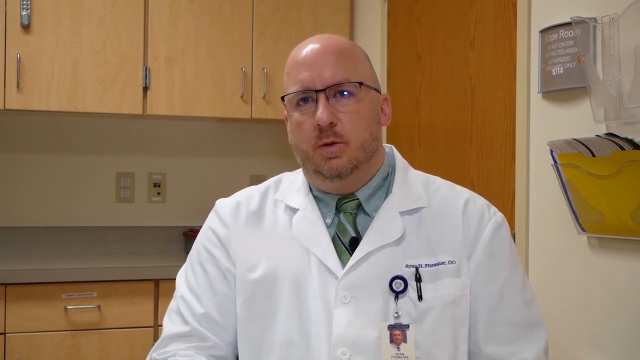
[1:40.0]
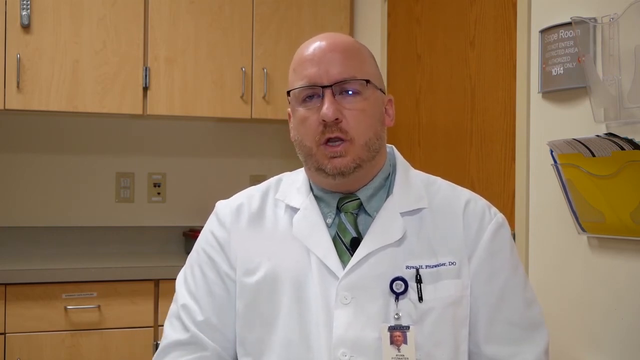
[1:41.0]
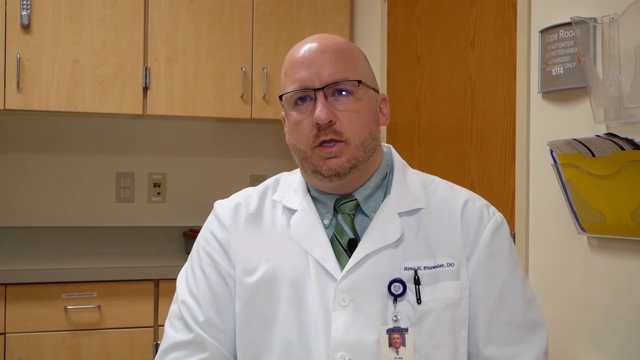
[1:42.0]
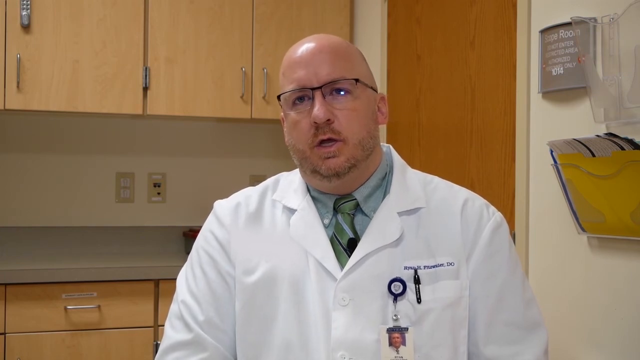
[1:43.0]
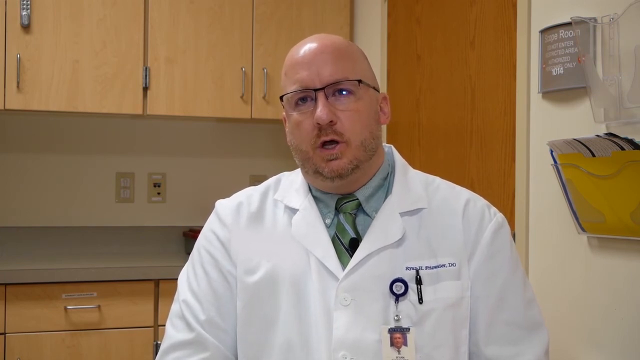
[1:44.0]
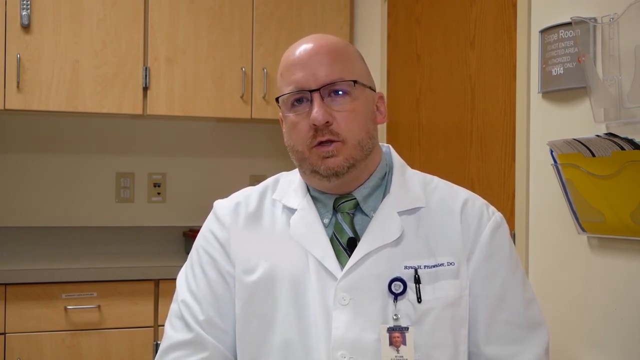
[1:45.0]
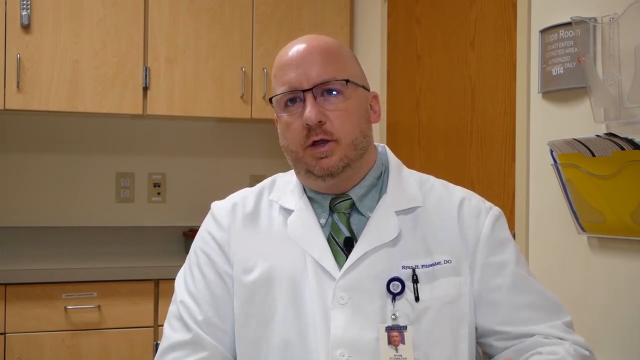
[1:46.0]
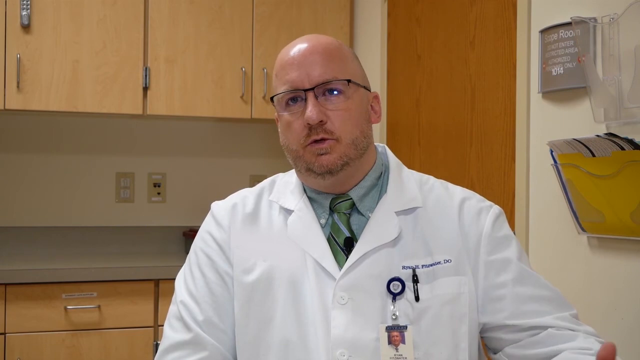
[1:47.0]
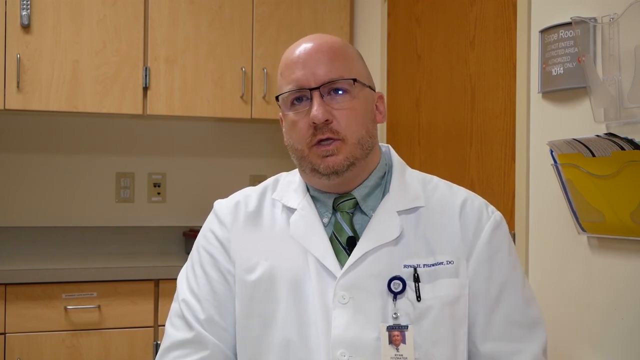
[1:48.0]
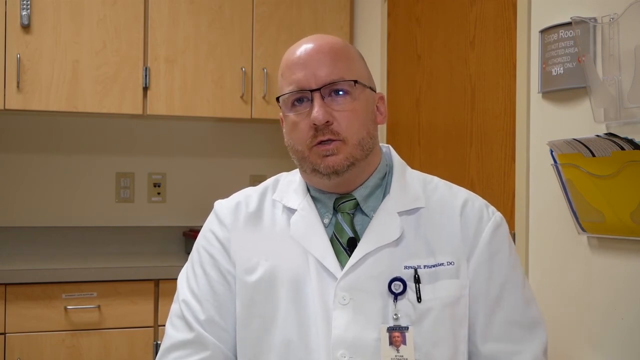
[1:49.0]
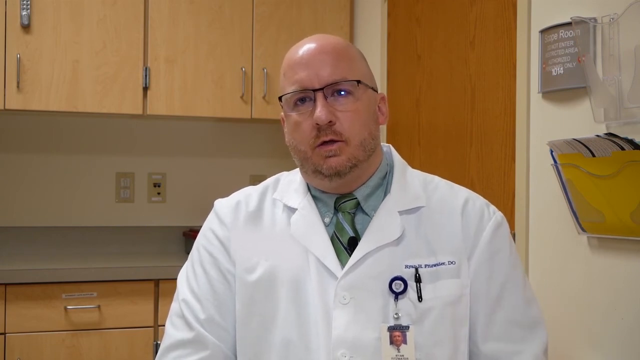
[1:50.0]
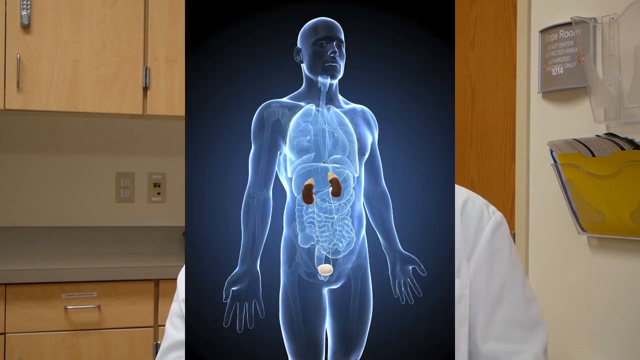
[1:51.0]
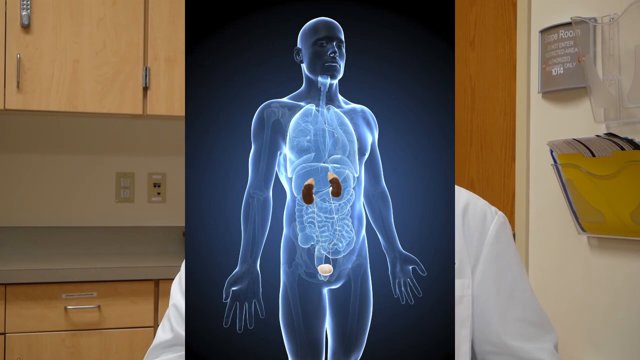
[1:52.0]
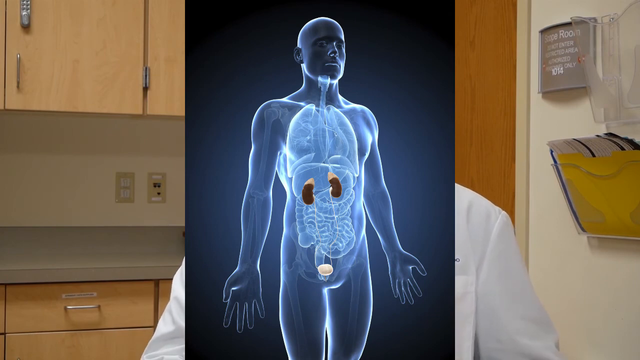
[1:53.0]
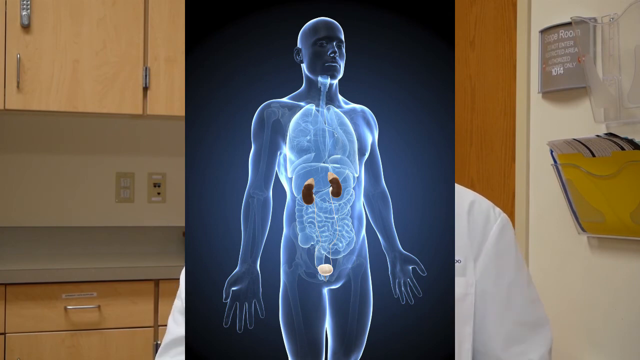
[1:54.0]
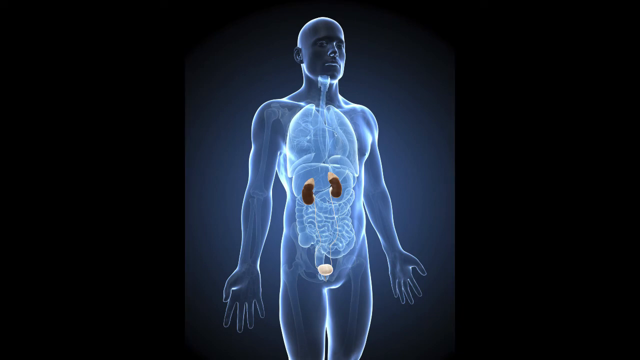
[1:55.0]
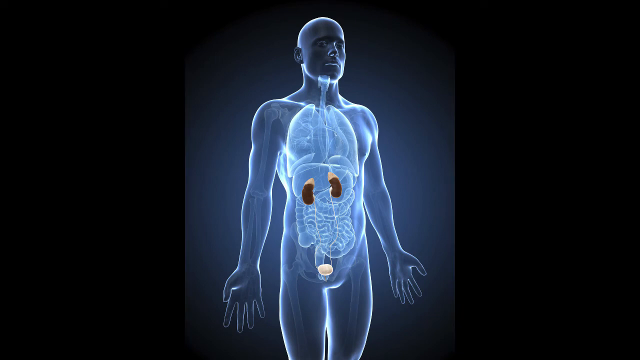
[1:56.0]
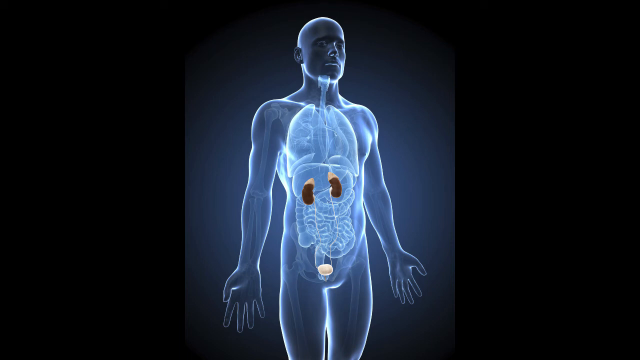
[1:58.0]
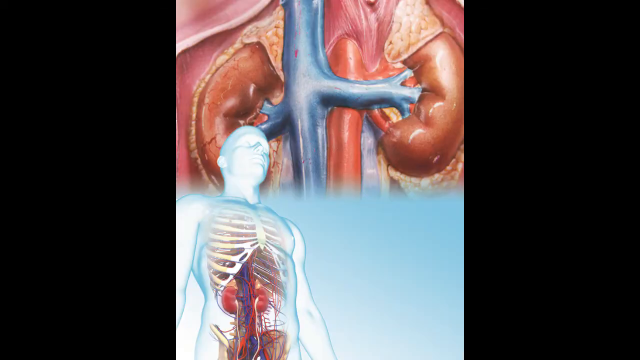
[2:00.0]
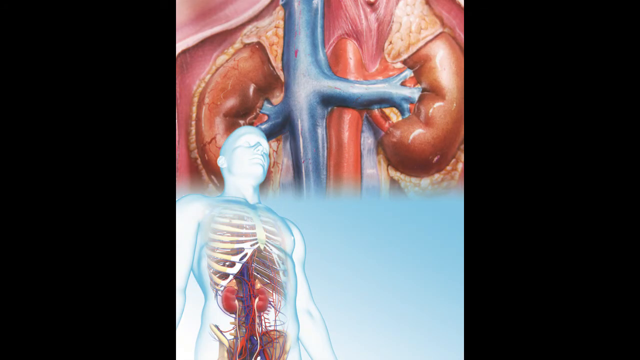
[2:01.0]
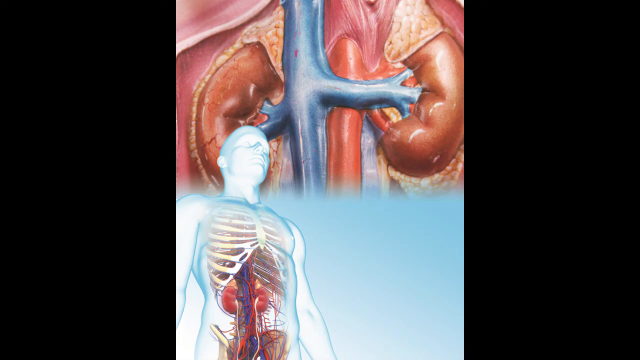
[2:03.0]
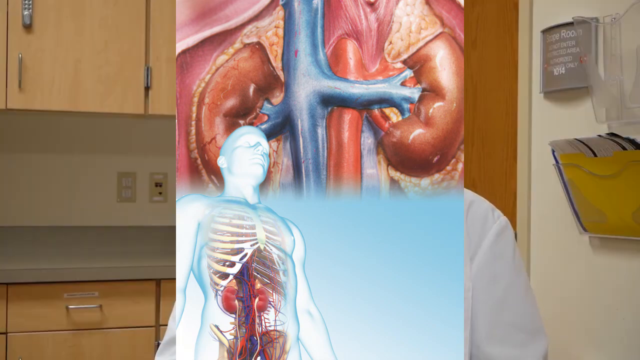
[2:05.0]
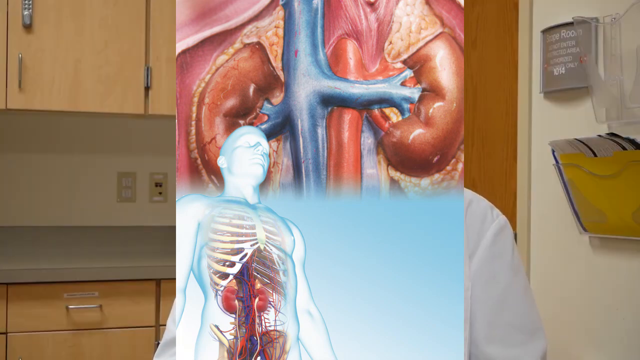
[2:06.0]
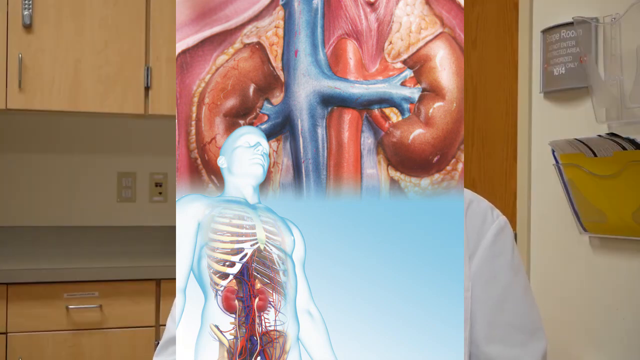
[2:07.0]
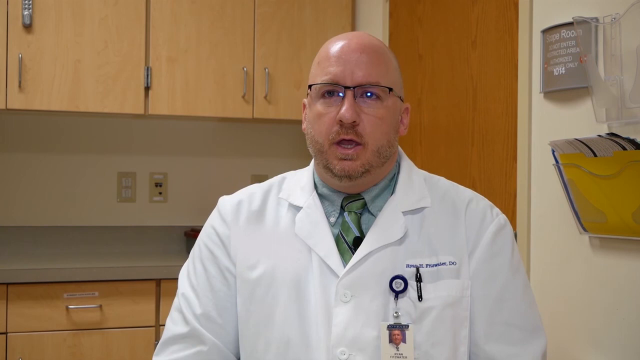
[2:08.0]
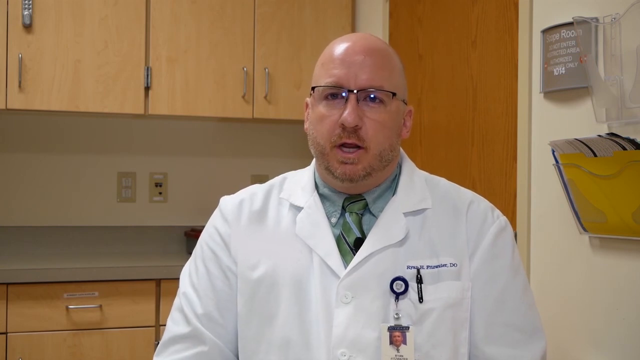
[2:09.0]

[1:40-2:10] The doctor continues to talk, moving his right arm slightly and then his left arm slightly toward the bottom right corner before bringing his left arm back close to his body. A large picture then appears in the center, showing a very transparent human body. The figure looks to the right side, with its arms kind of spread out and hanging downward. The abdomen and kidney area in the middle is highlighted in a light blue color, and the two kidneys in the middle of the abdomen look dark. Only this image is then visible: an outline of the human body in light blue, illuminated a very light blue, especially in the middle. A different view of the kidneys follows, with a picture of the two kidneys, left and right, on top and the upper half of the human body on the bottom left. These images are colorful, and the kidneys look brownish red. With this image still visible, the doctor appears in the background, and then the doctor is shown speaking again, sitting in the exam room and looking upward to the left side.